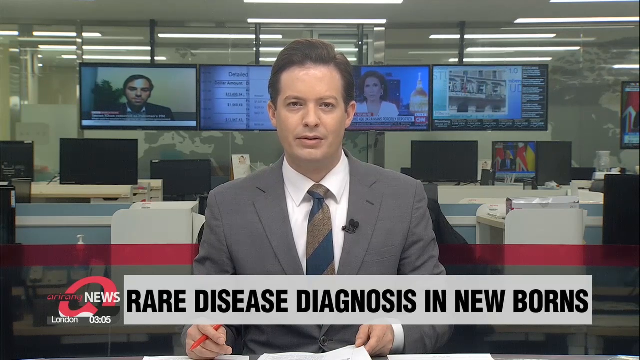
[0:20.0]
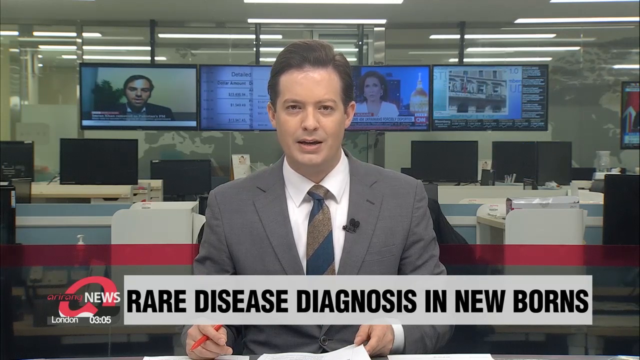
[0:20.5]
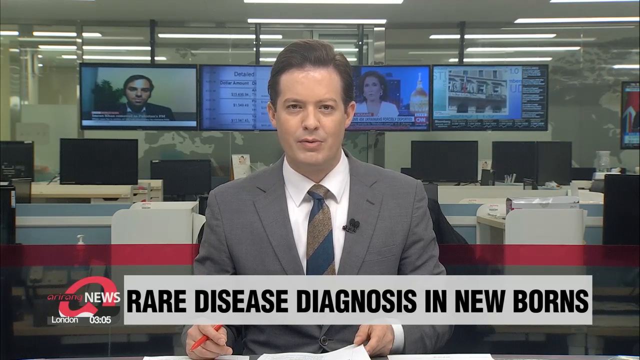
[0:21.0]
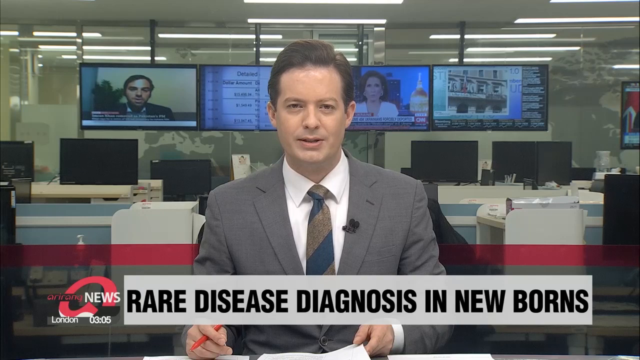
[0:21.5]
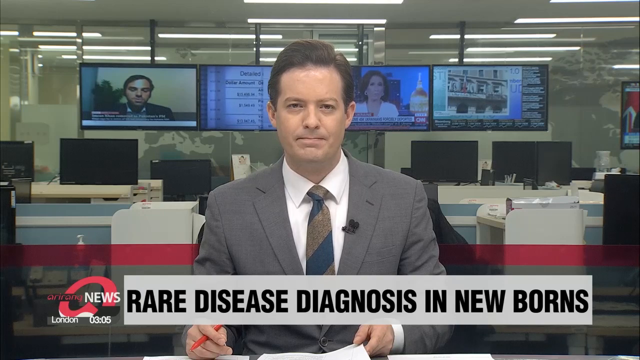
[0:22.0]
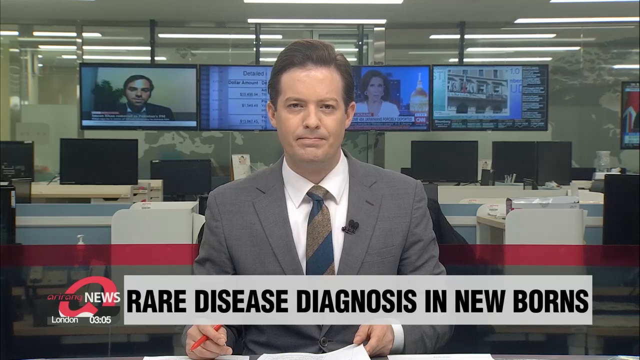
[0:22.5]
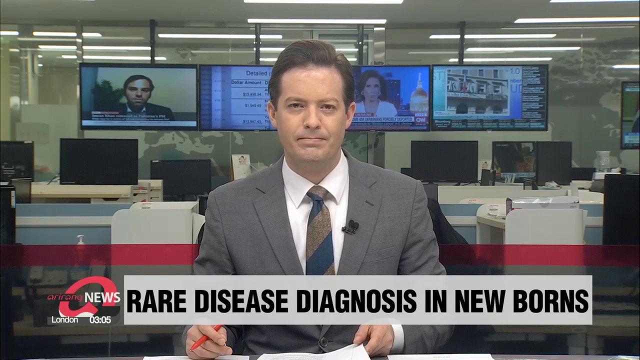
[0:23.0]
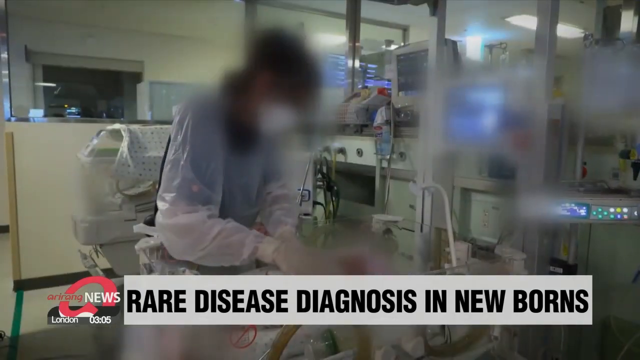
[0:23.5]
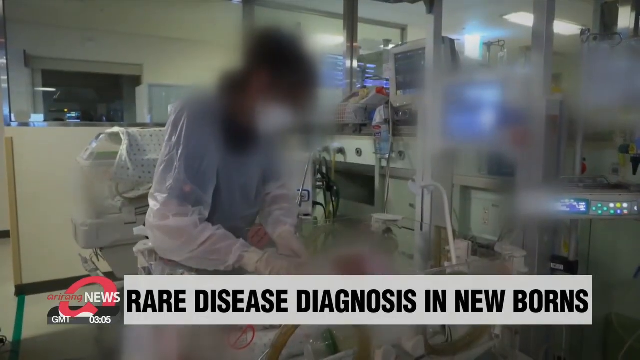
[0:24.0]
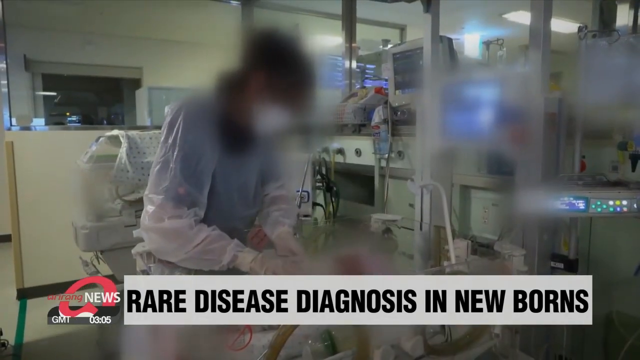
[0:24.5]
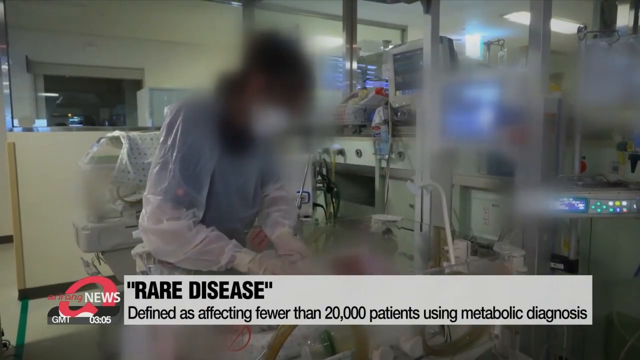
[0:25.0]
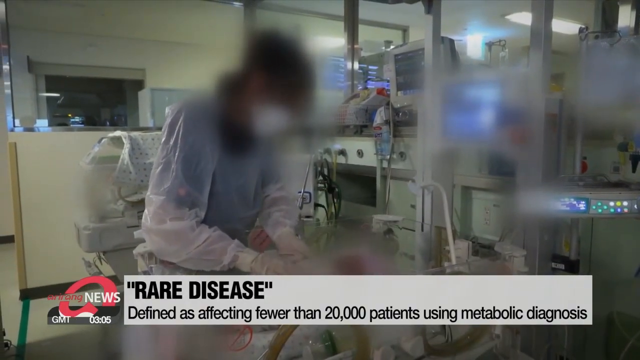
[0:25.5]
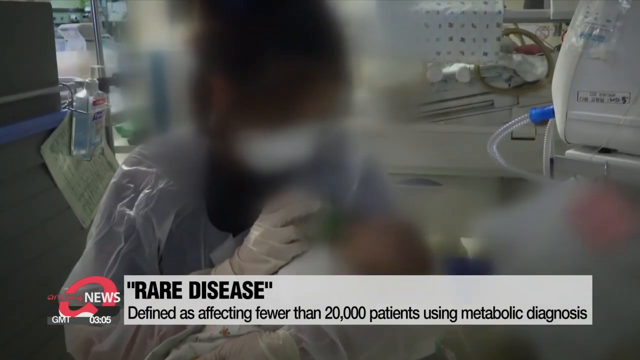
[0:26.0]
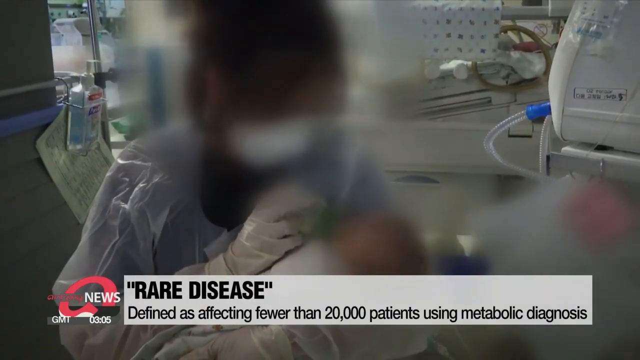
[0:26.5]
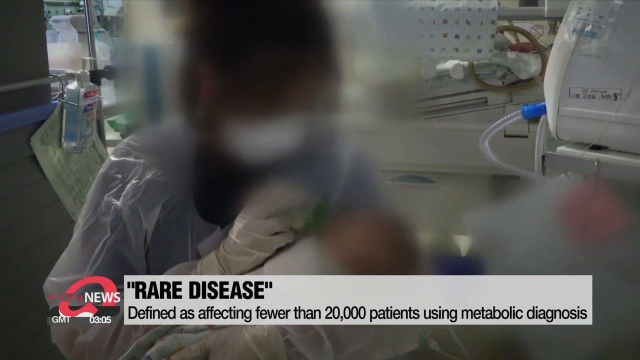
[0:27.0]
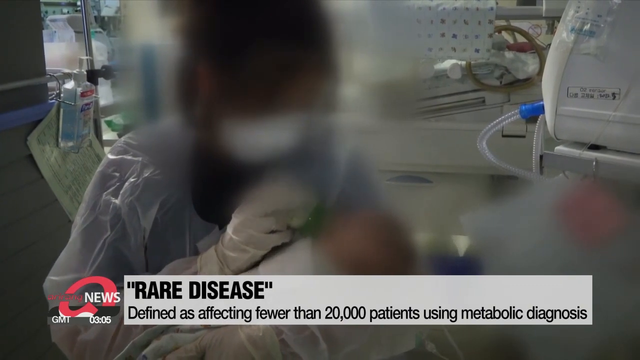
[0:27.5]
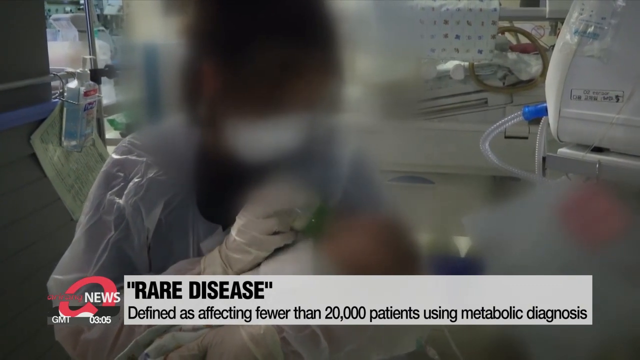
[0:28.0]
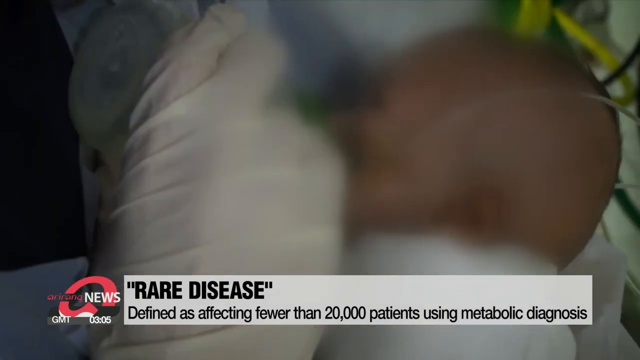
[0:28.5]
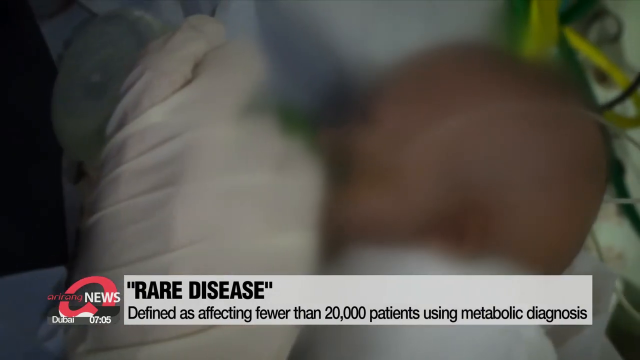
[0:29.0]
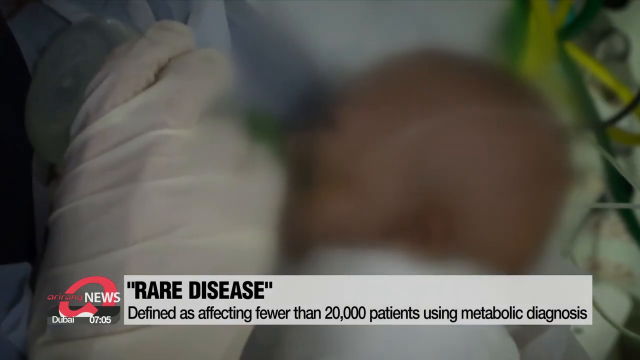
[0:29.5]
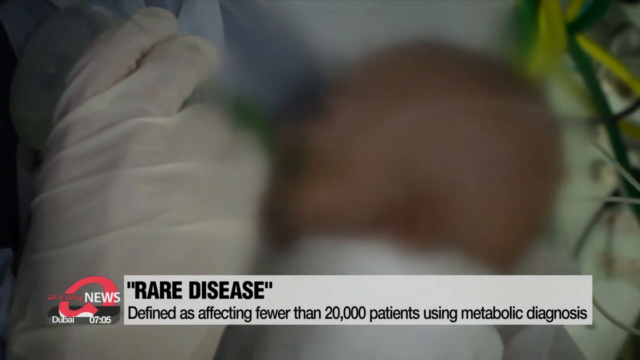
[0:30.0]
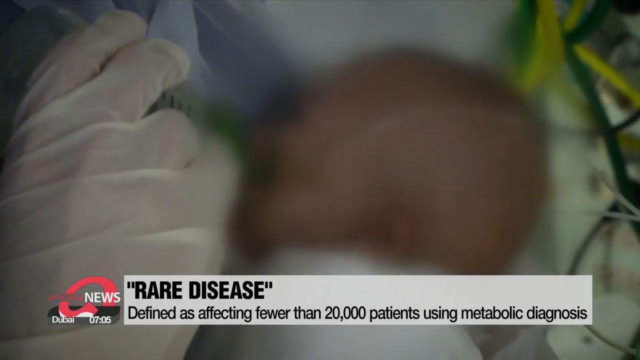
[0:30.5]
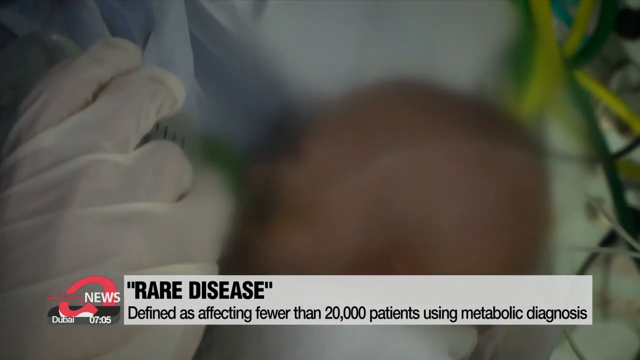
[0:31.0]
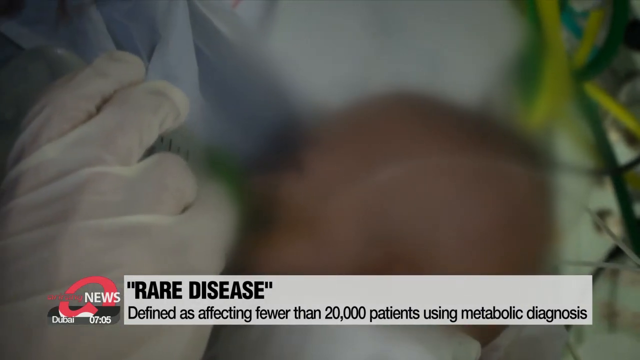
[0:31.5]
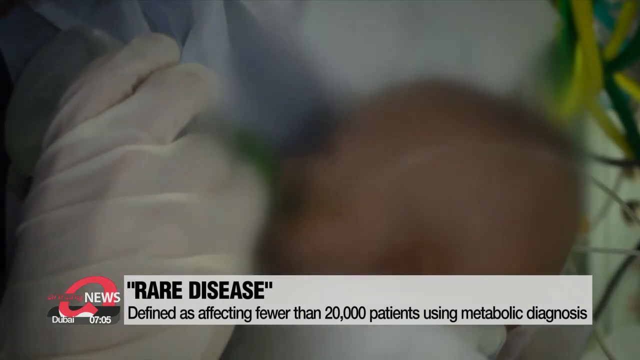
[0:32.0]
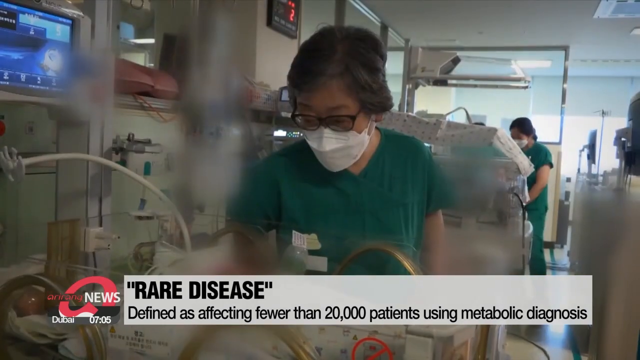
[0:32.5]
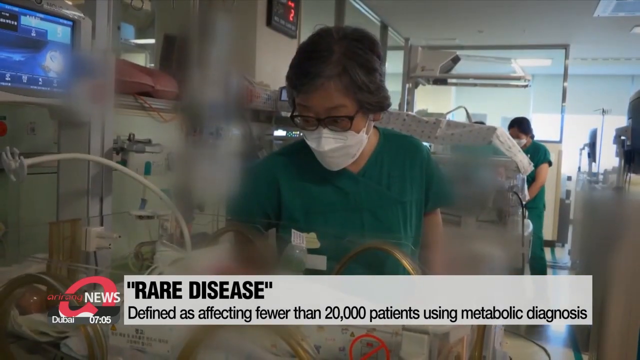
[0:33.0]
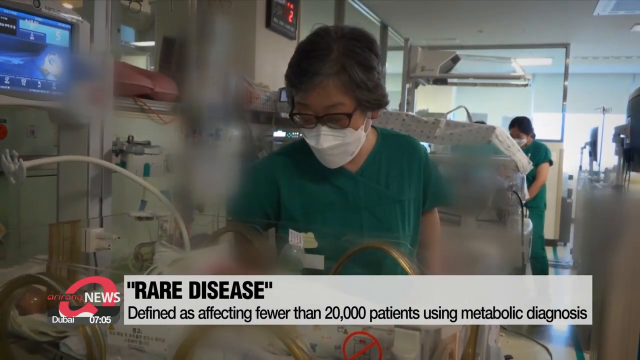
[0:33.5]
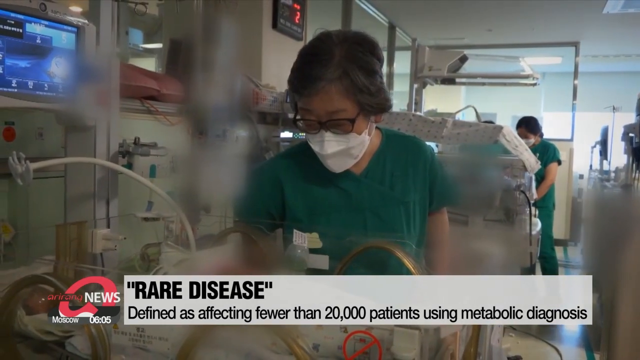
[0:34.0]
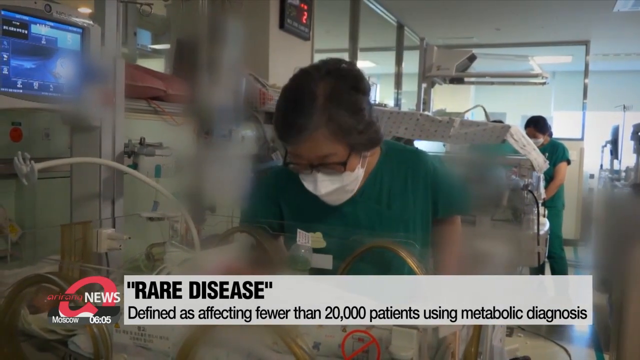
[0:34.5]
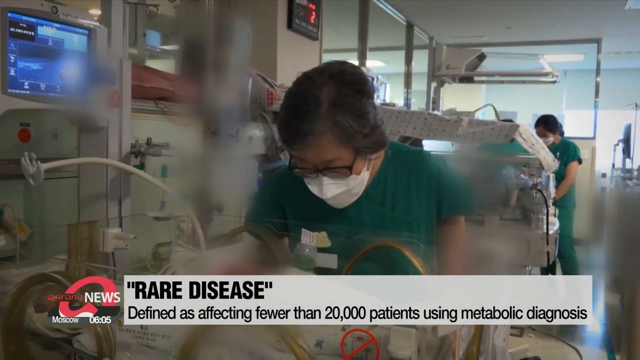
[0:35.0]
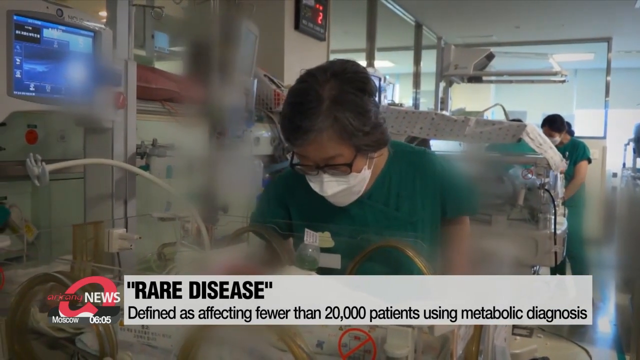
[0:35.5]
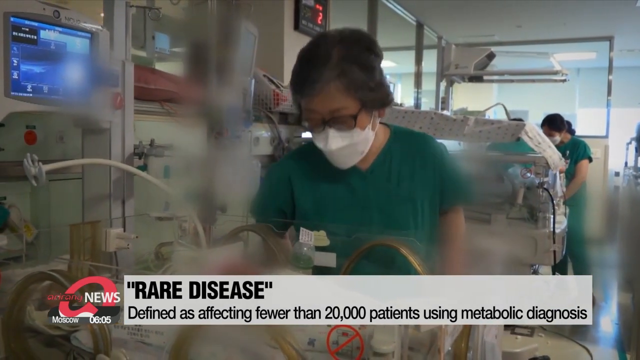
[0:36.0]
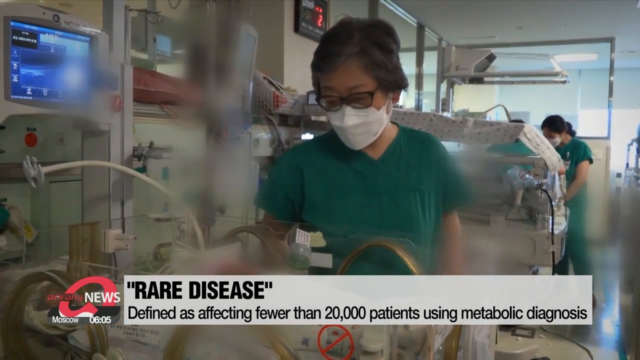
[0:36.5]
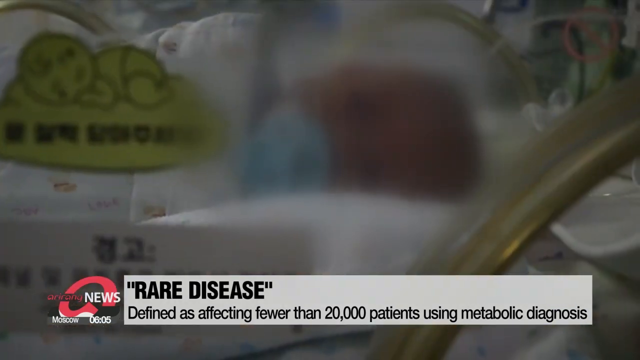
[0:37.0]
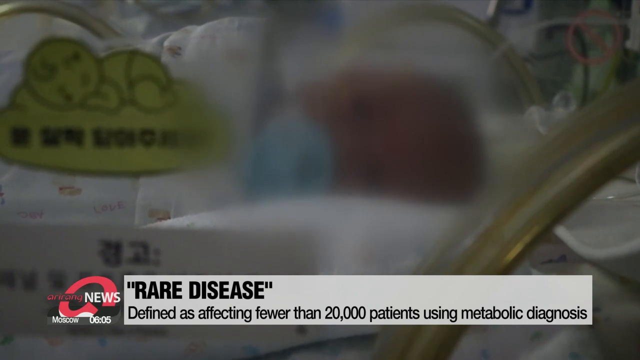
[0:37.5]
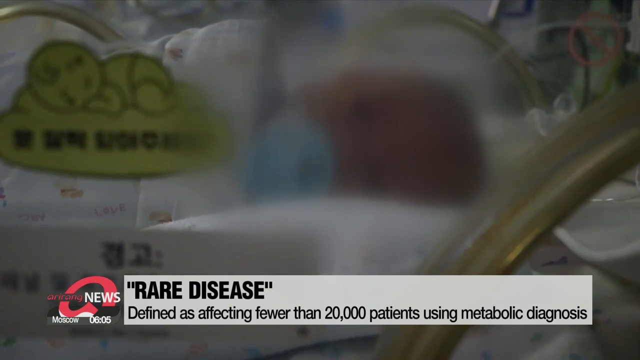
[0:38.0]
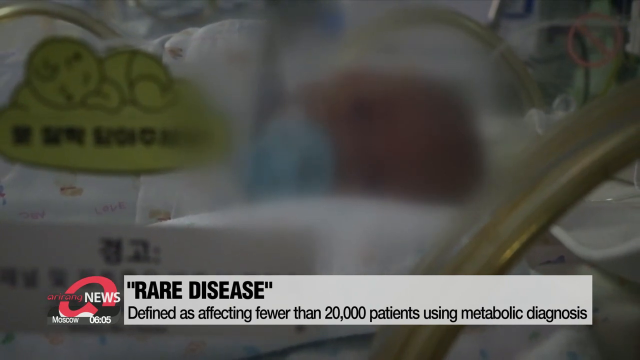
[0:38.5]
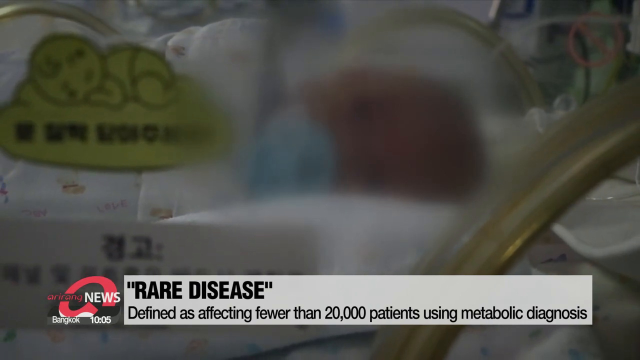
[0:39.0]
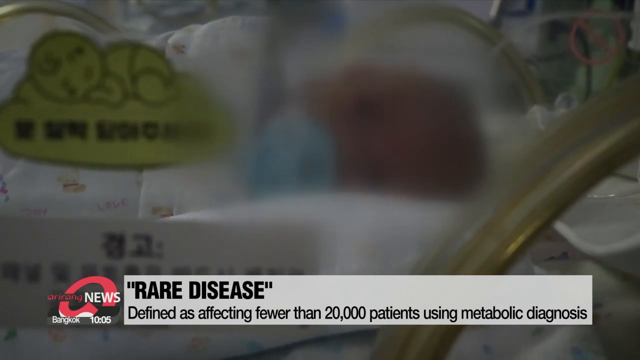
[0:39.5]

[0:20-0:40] The reporter wears a lapel mic. When he stops talking, the video cuts to the inside of some type of medical facility, and the crawler reads "rare disease defined as affecting fewer than 20,000 patients using metabolic diagnosis." The camera cuts to a closer view of a woman with a blurred-out face, wearing what looks like a hazmat gown and gloves, holding a baby whose face is also blurred and feeding it from a bottle. Various monitors and many tubes are visible as she feeds the baby. A close-up of the baby follows, its face still blurred. Next, nurses in green scrubs look at monitors or incubators with babies inside. A shot shows an incubator with a small baby-logo sticker on it, where a baby with a blurred face sleeps under a blanket.